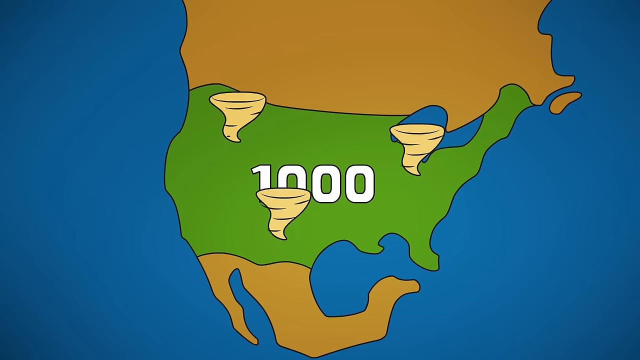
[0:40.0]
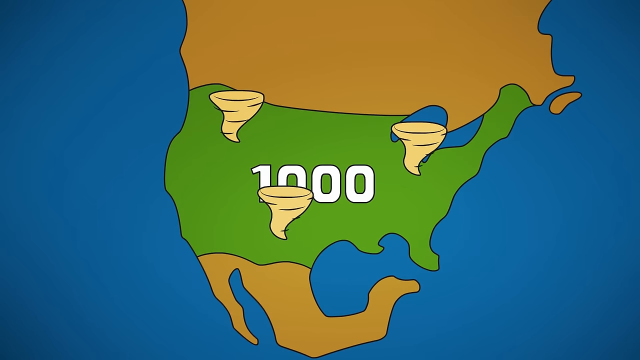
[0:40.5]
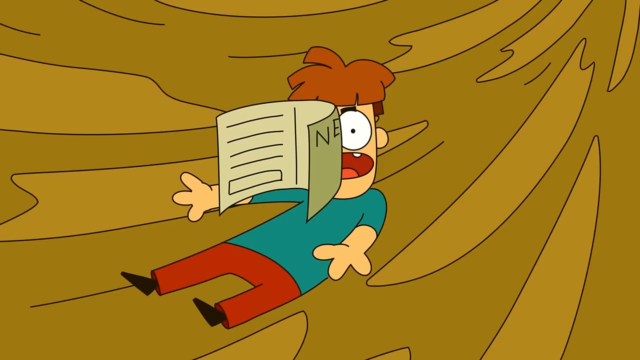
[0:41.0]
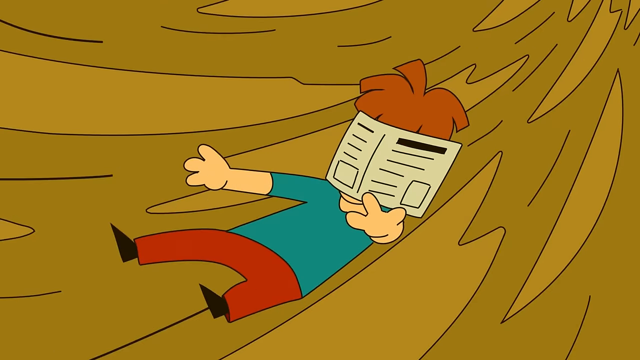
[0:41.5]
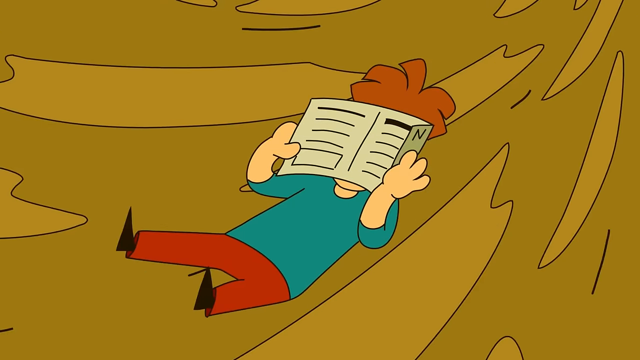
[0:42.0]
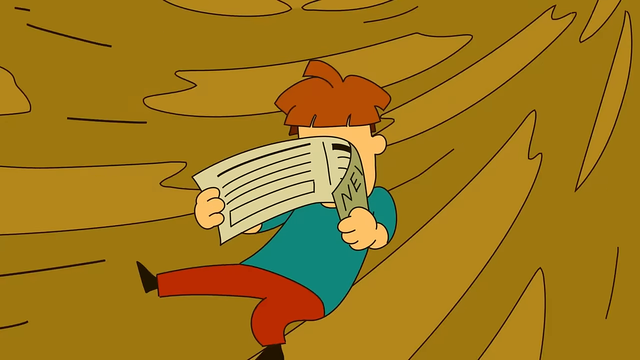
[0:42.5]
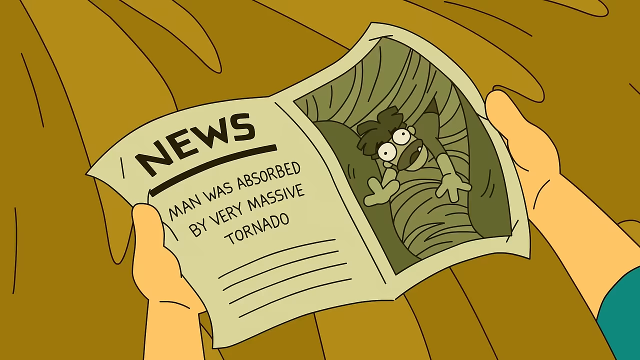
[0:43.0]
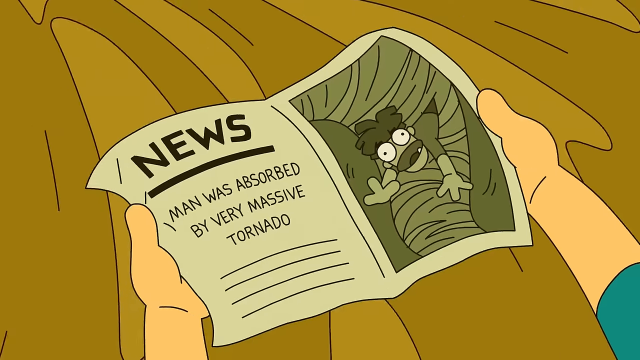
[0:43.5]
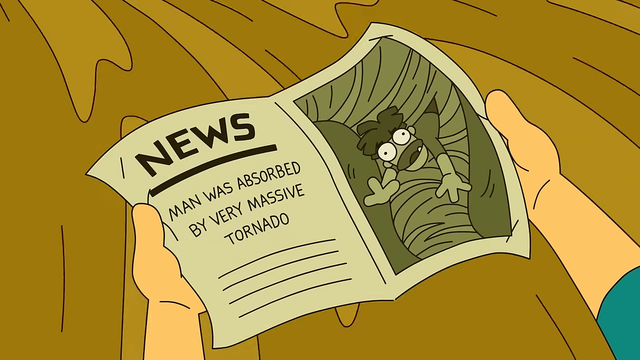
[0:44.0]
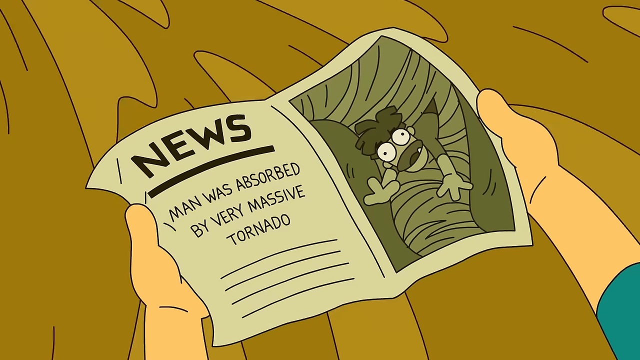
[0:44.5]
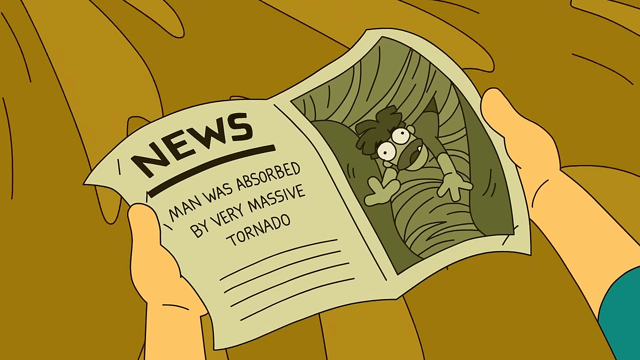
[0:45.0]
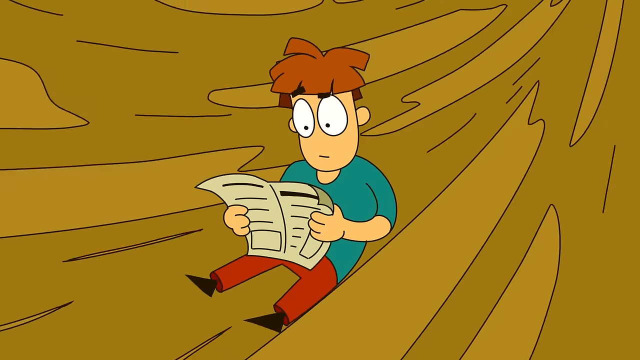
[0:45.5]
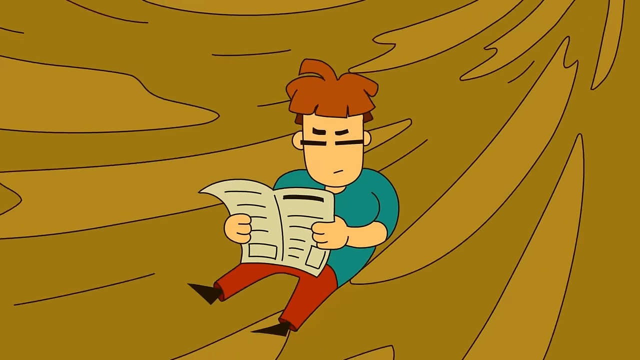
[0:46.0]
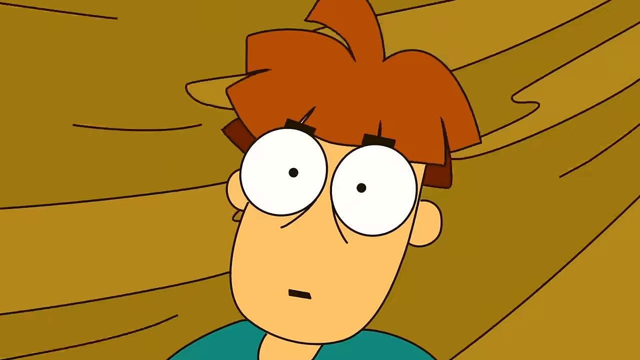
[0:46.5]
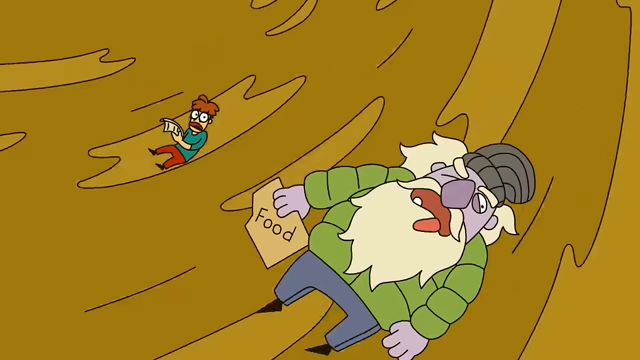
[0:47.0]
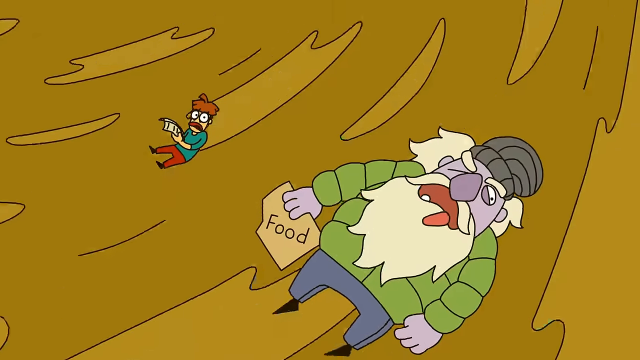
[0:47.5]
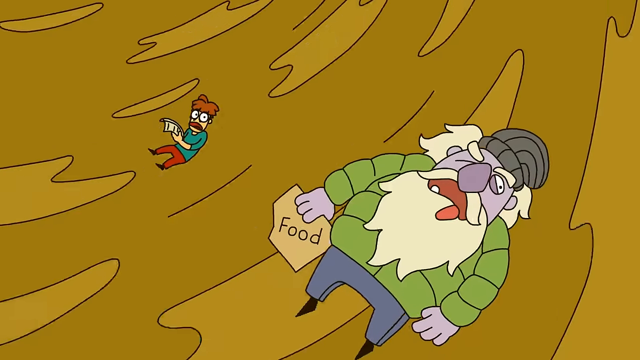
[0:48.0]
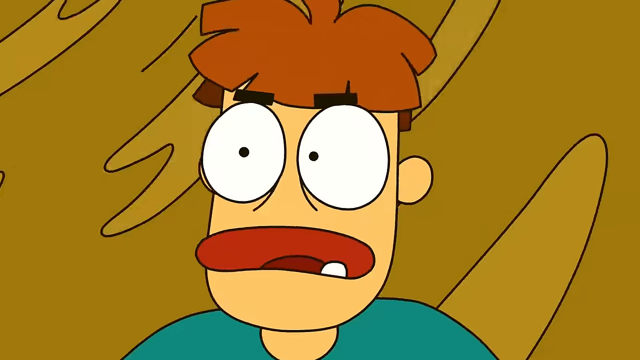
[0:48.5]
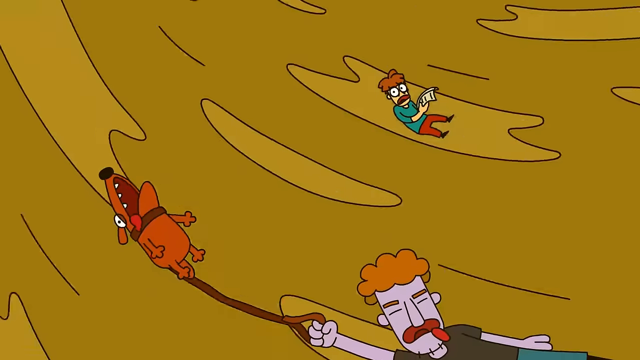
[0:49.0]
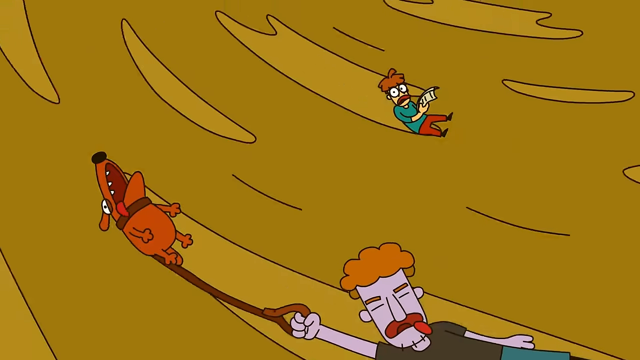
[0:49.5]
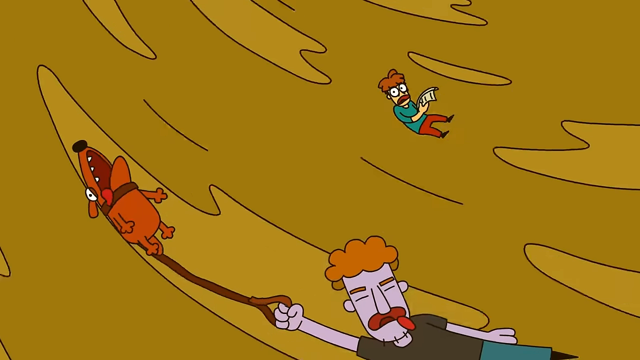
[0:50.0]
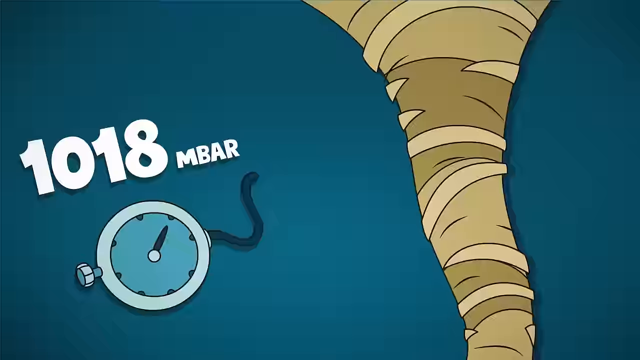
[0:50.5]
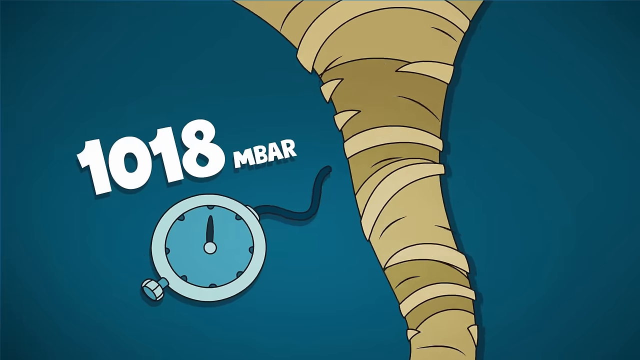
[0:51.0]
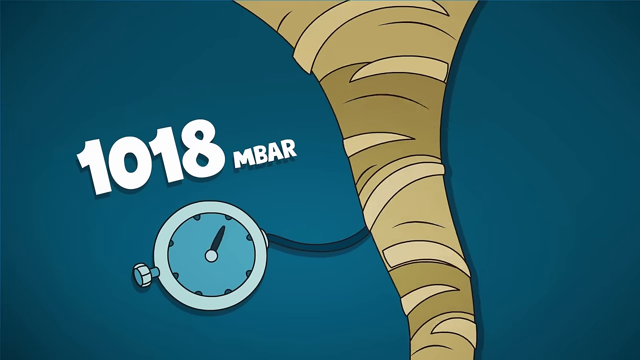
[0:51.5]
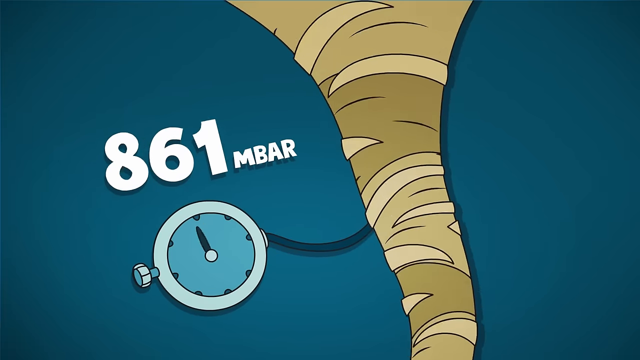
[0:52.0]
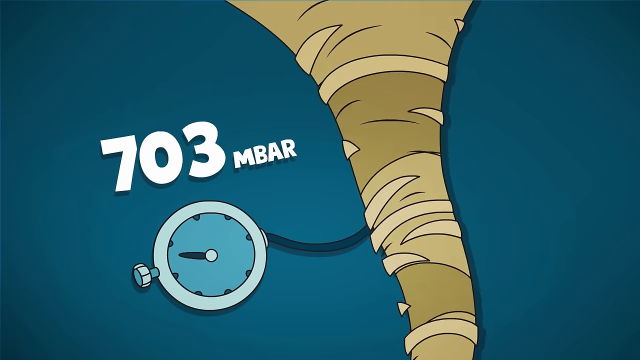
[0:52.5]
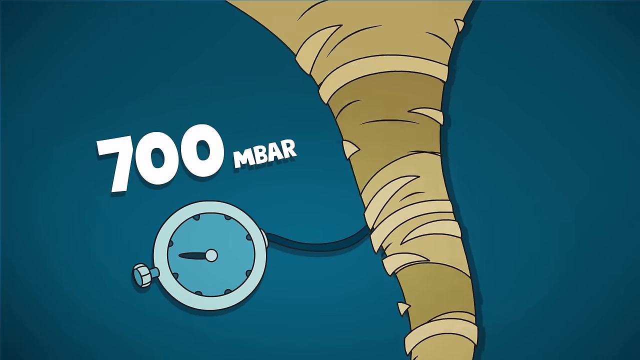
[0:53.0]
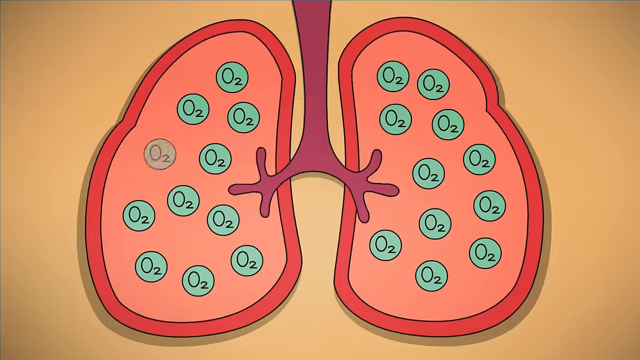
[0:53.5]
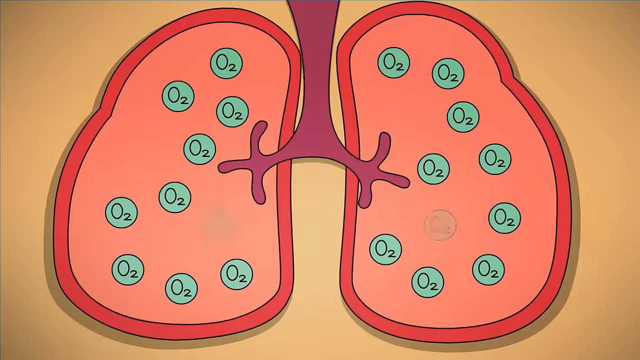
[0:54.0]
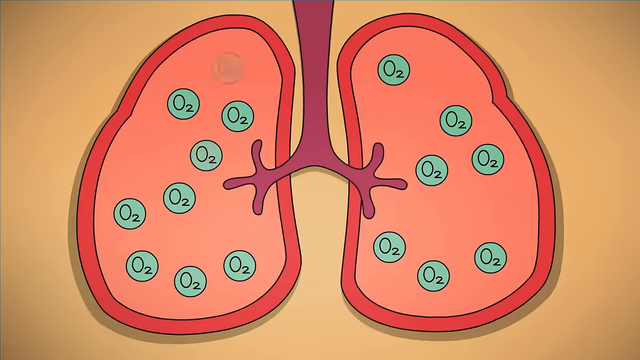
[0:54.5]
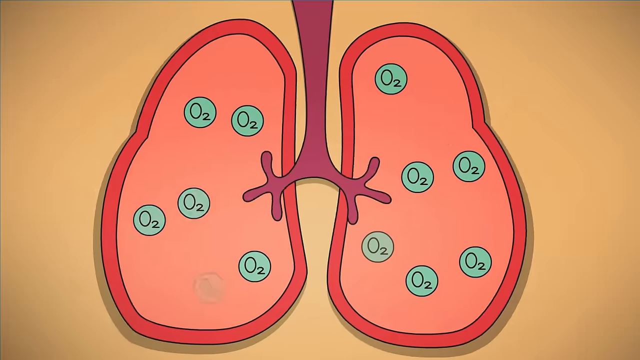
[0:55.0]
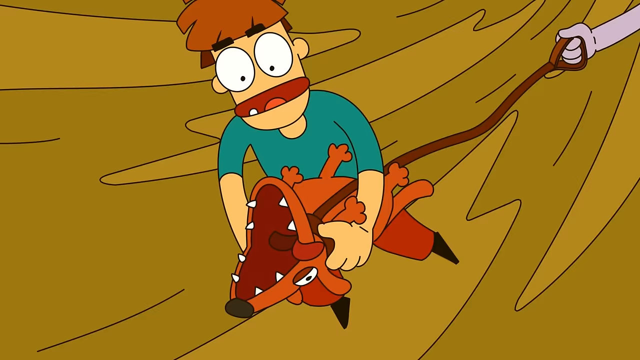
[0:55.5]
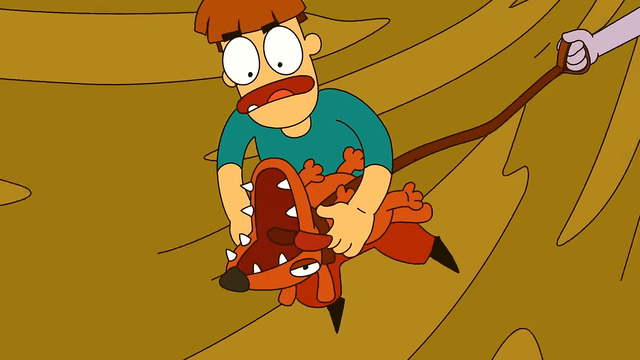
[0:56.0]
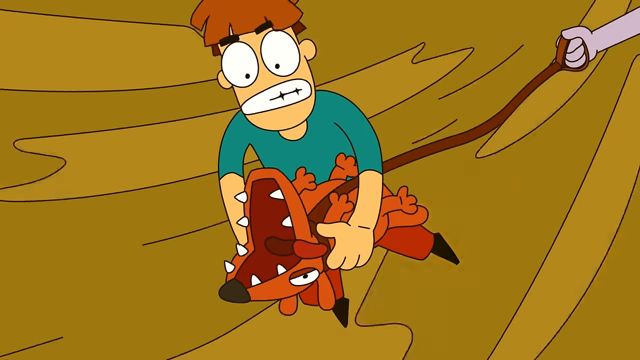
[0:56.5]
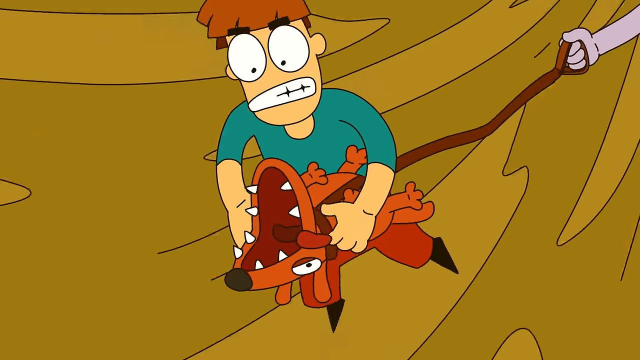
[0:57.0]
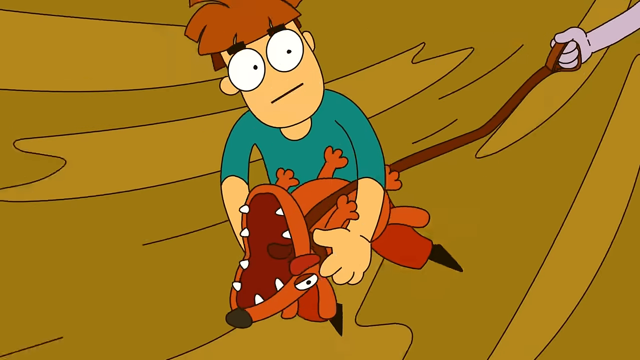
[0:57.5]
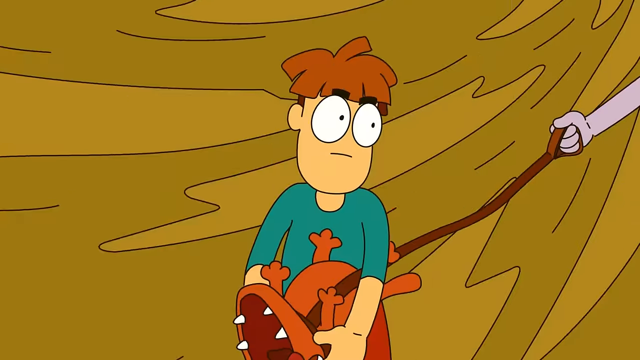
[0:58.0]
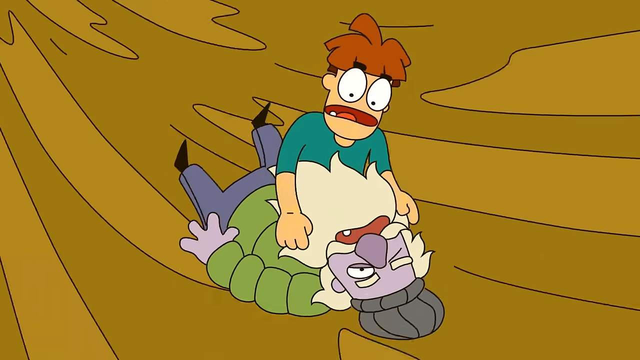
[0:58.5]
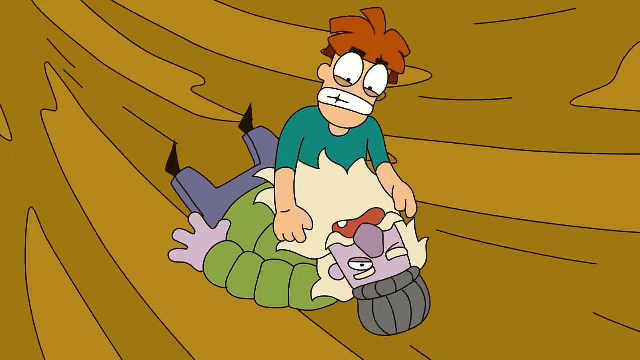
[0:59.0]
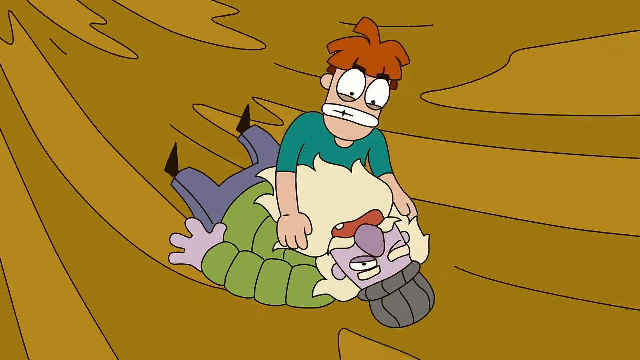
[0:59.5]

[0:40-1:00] A cartoonish map of North America shows the United States in green and the rest of North America in a brown color. Three tornadoes, kind of cream in color, are on it: one in the northwest, one in the southwest and one in the northeast. In the center of the United States, "1,000" appears in white characters, and a tornado is shown spinning. The scene changes to a cartoonish character with brown hair, a greenish or bluish, kind of aqua green or blue shirt, reddish pants and black shoes. A newspaper or some kind of magazine flies onto the character's face while they float around, and a tornado appears. They pull the paper off their face; on the left of it, black text reads "Man was absorbed by a very massive tornado", and on the right is a picture of the same character with their torso sticking out of it, eyes bulging, looking surprised. The scene then changes to another cartoon character with purple skin who is also floating around in the tornado.